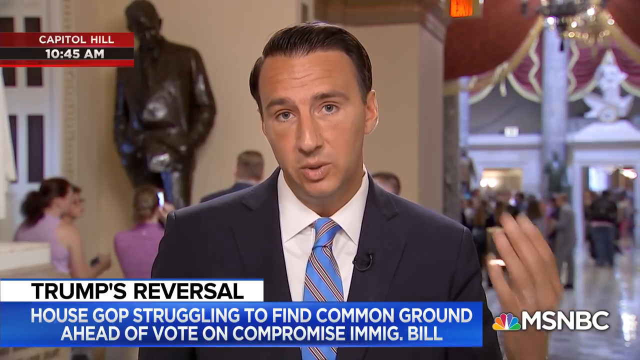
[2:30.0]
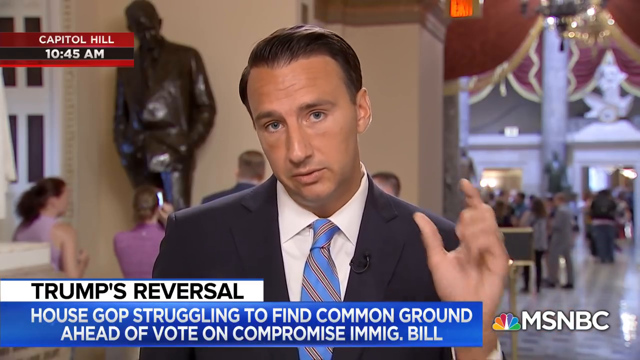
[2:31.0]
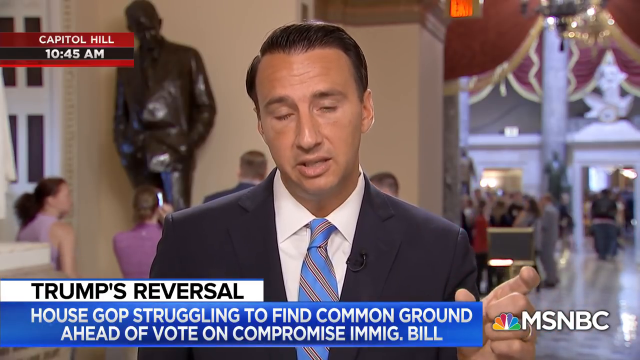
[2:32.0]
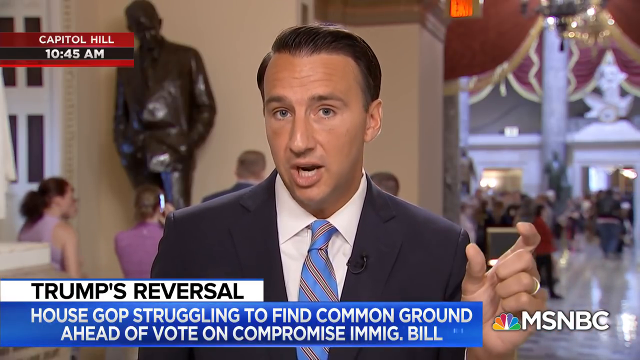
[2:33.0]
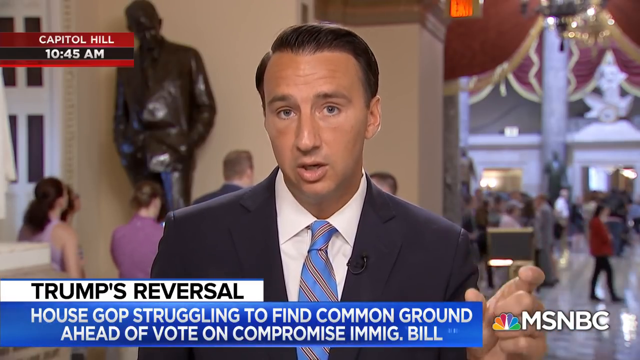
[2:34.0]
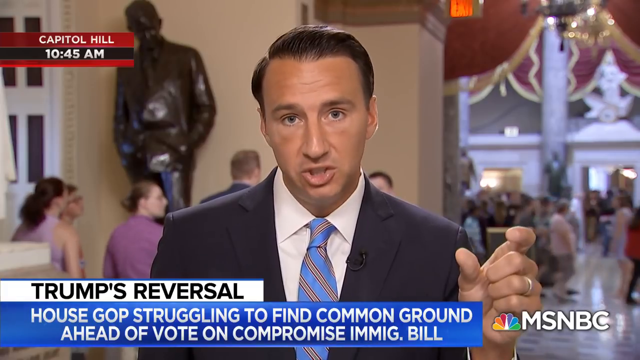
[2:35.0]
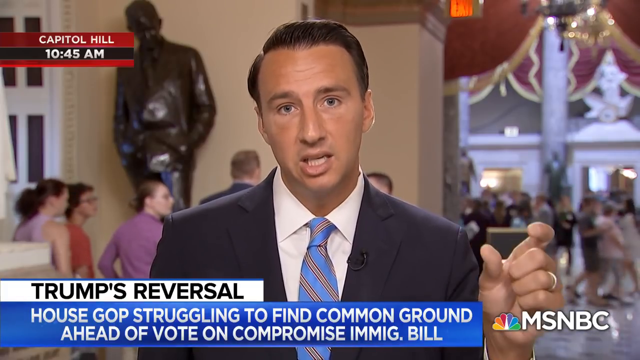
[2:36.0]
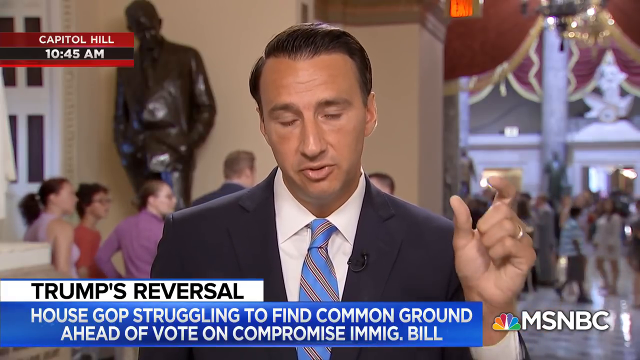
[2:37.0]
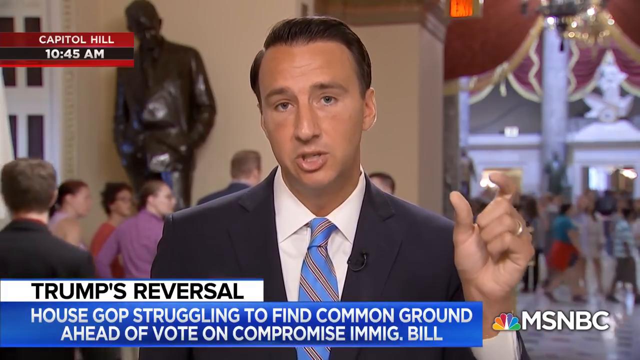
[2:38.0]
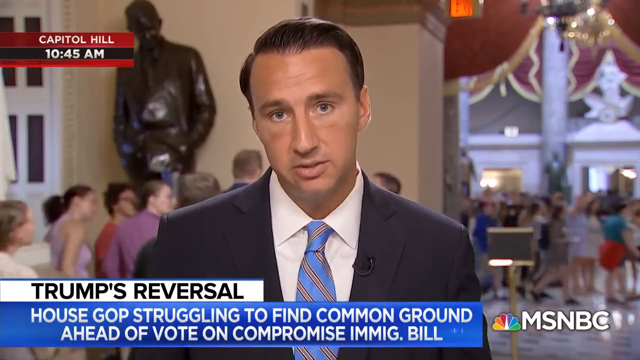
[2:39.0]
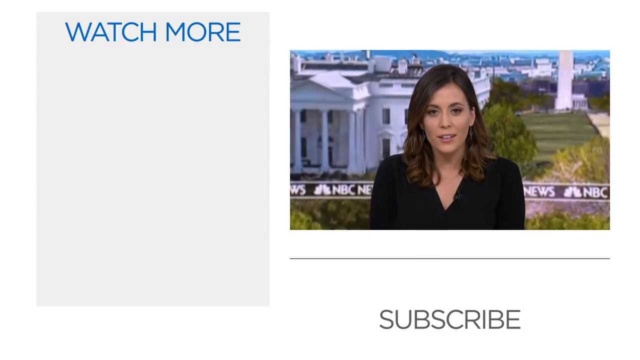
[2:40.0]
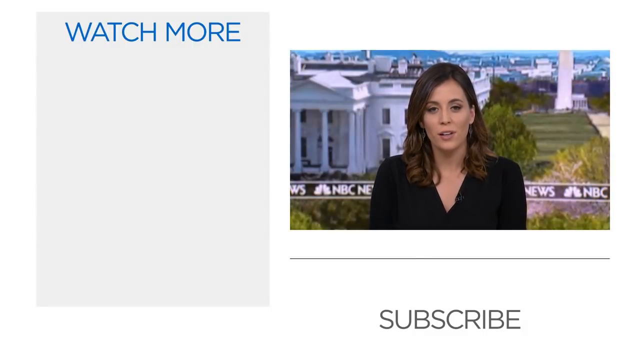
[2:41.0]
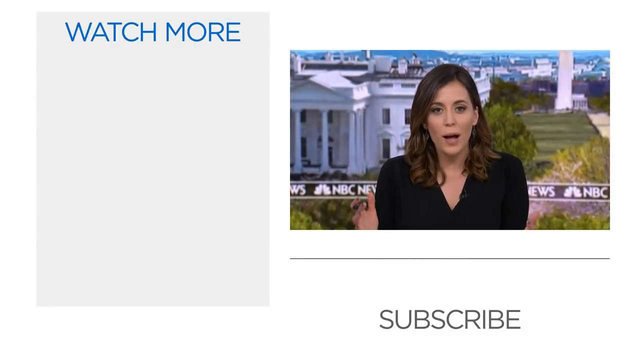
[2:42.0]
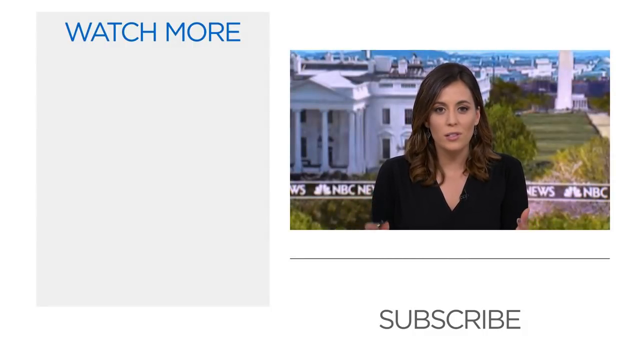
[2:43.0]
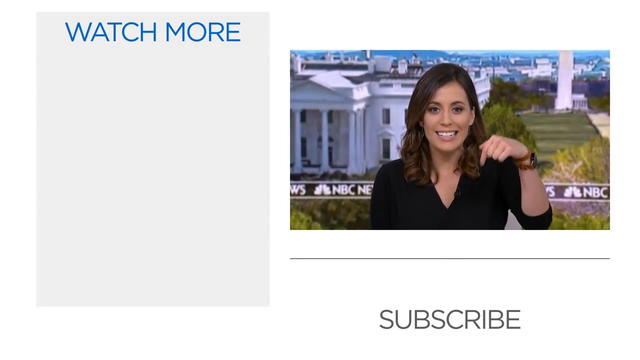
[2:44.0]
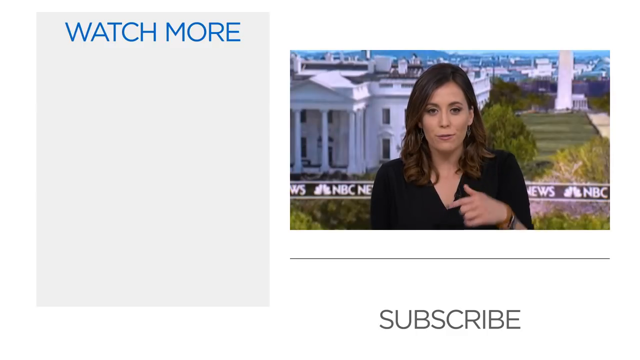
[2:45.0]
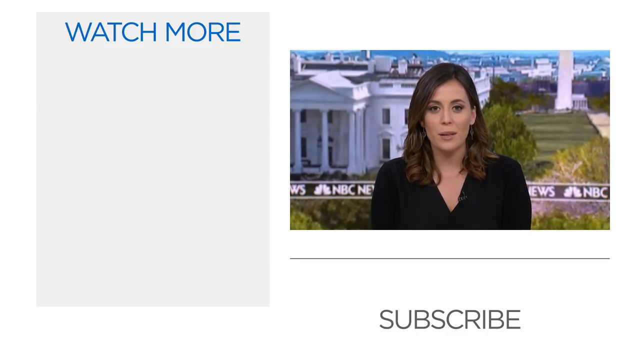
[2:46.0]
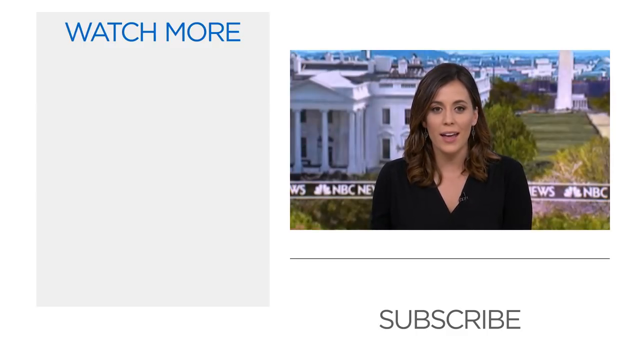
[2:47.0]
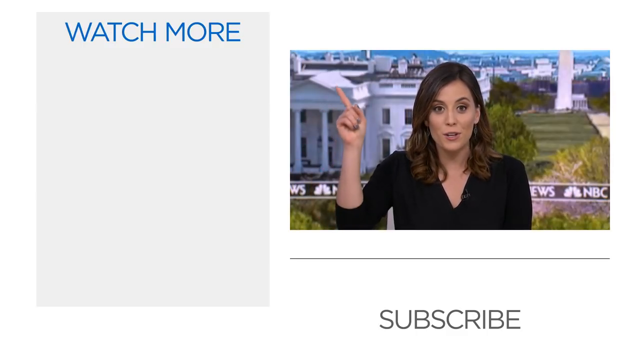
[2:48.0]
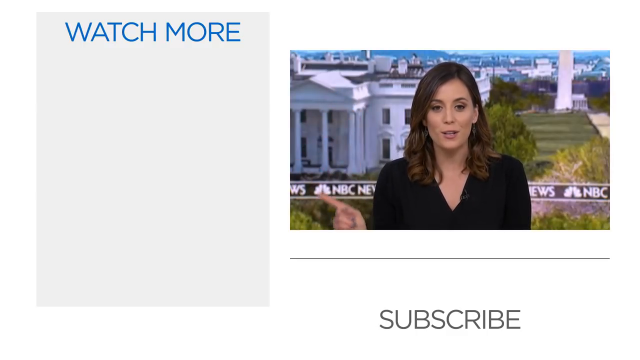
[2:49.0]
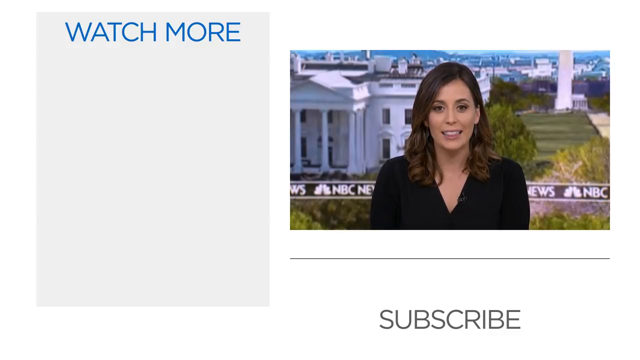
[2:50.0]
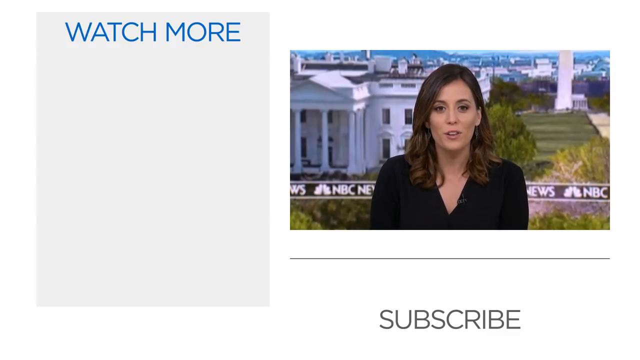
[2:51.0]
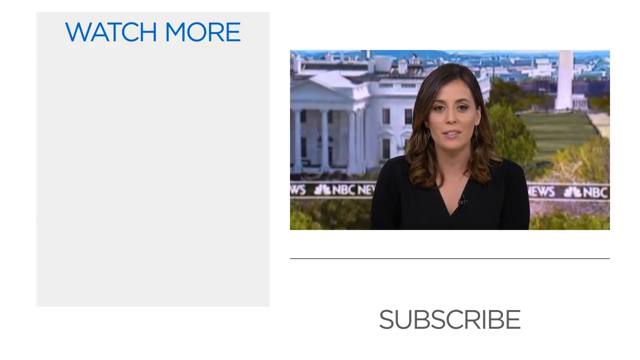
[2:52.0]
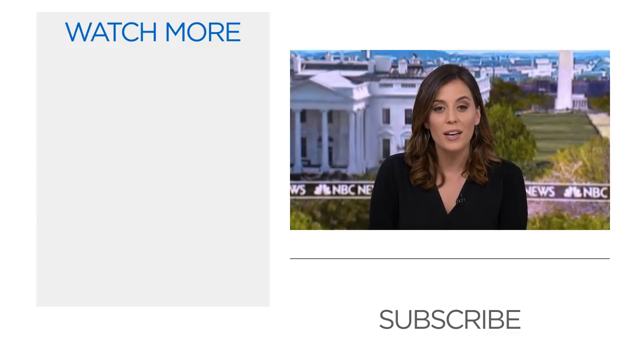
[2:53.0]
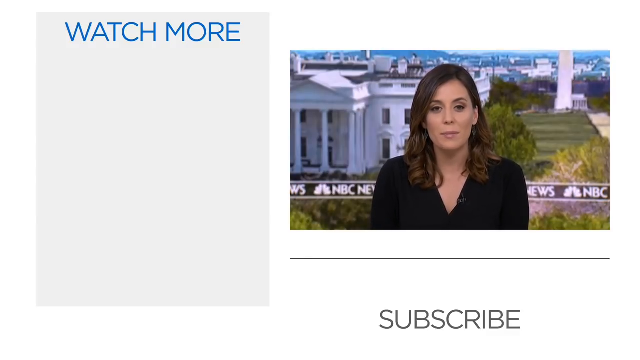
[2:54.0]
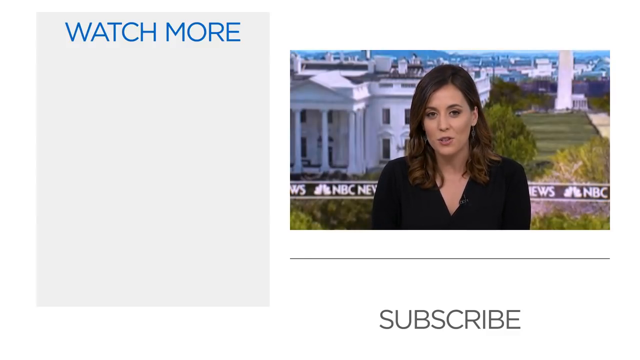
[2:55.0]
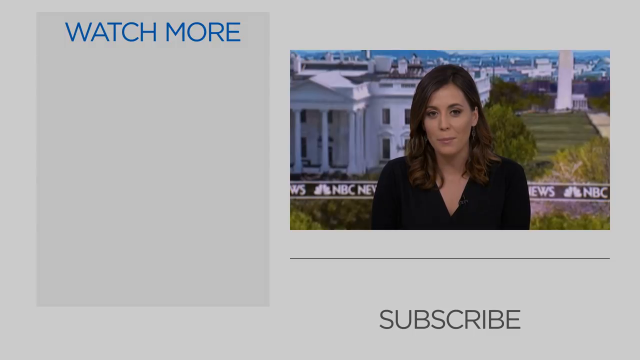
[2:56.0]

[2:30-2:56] Representative Costello is still shown full screen, speaking. He gestures with his left hand, holding his thumb and forefinger apart as if demonstrating an amount of something, perhaps a gap. Behind him the Capitol is busy with people visiting. Then, on the left-hand side, a text box says "watch more", and on the right an inset shows Hallie Jackson sitting in front of a green screen with an image of the White House and Washington, D.C. behind her, and a crawl along the bottom fourth of that screen showing "NBC News" with the NBC News logo. She wears a black v-neck top. Underneath, it says "to subscribe". She gestures with her right hand pointing downward toward "to subscribe", then gestures with her right hand up toward the left side of the screen, where it says "watch more".